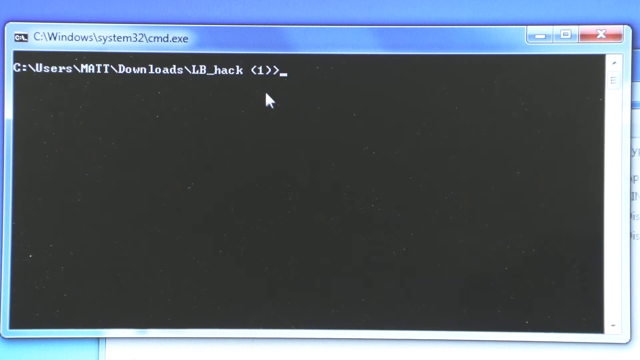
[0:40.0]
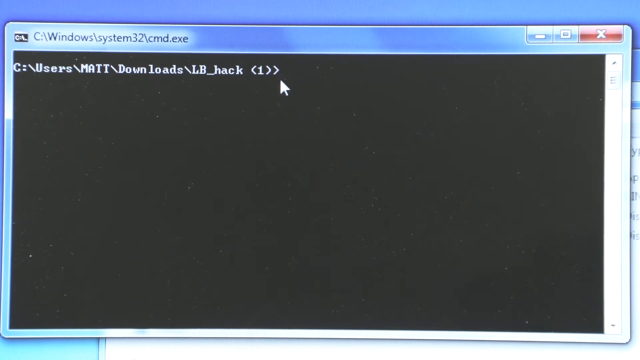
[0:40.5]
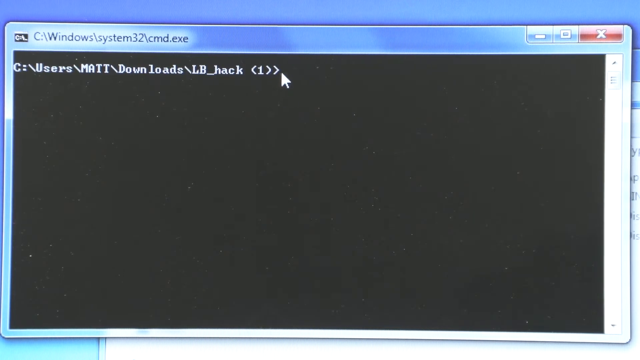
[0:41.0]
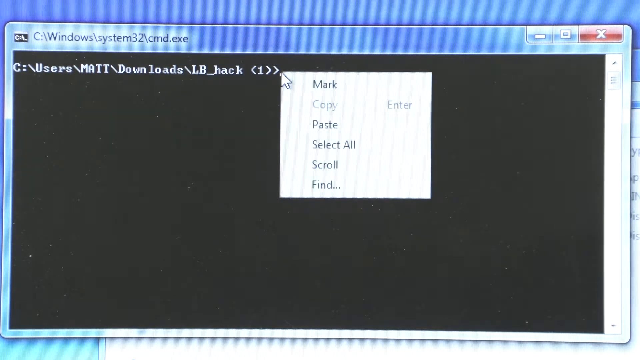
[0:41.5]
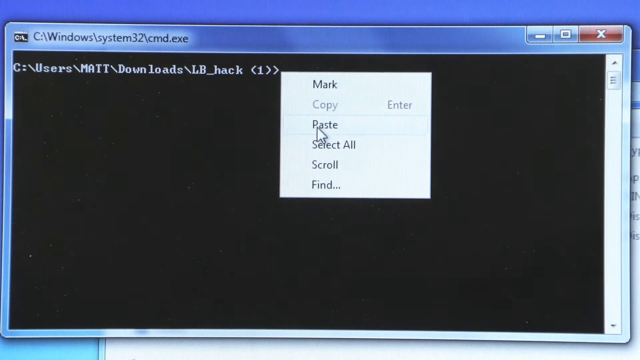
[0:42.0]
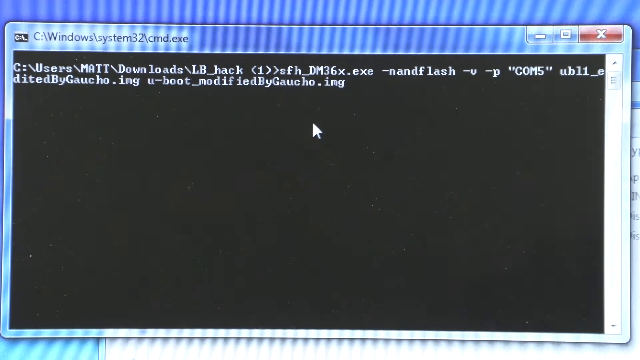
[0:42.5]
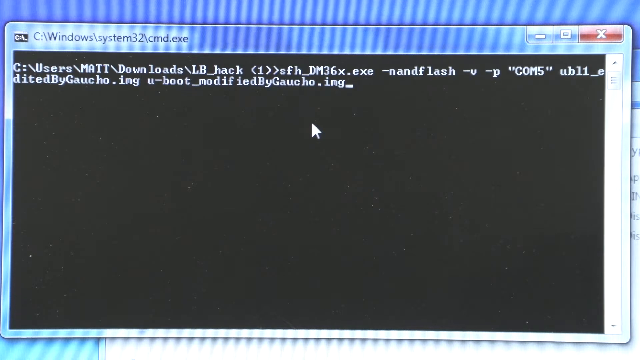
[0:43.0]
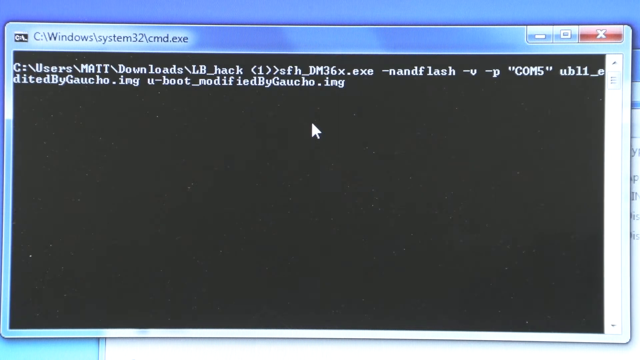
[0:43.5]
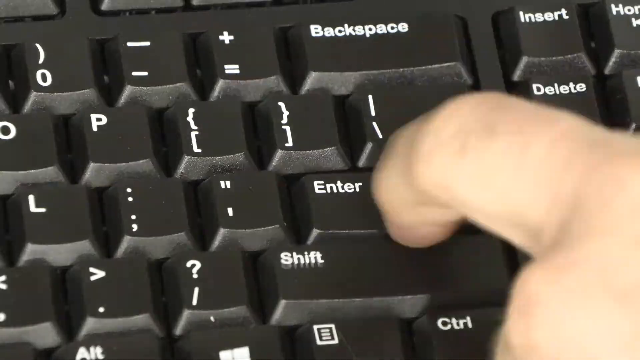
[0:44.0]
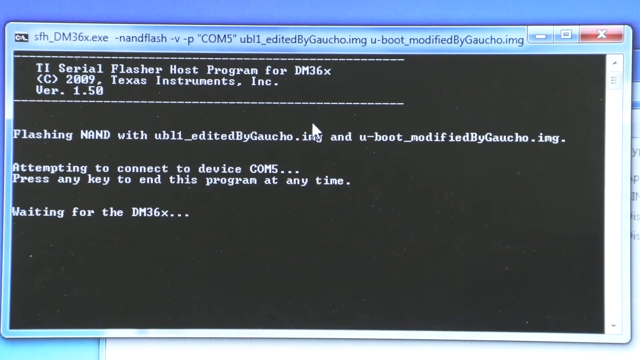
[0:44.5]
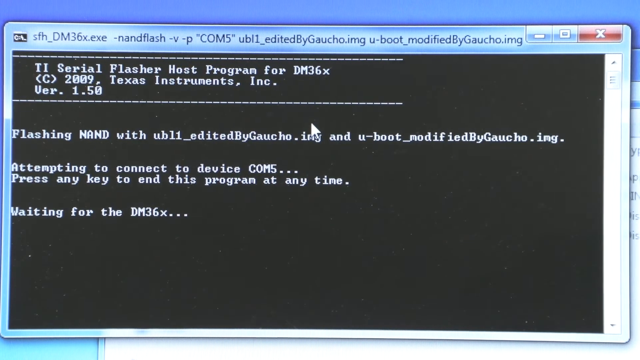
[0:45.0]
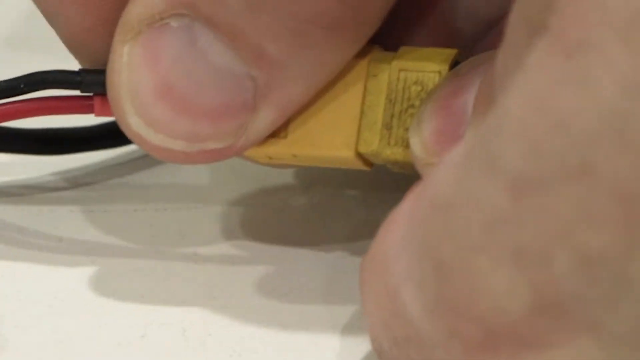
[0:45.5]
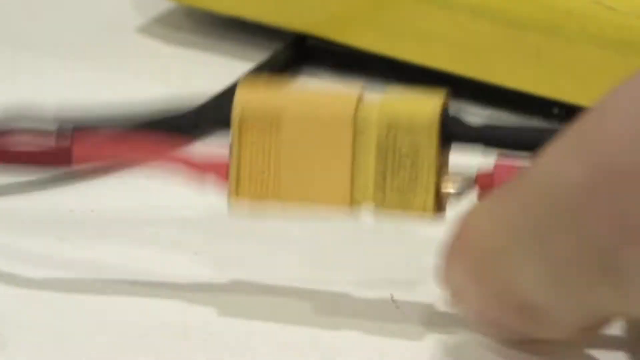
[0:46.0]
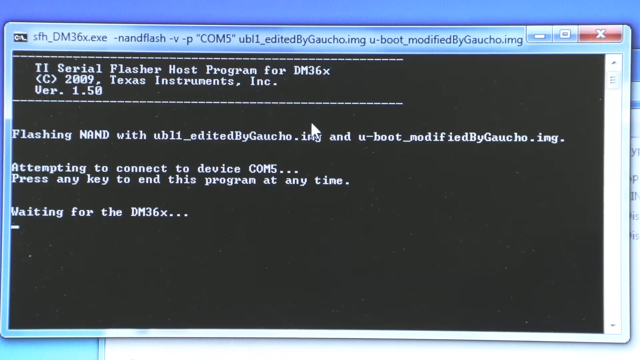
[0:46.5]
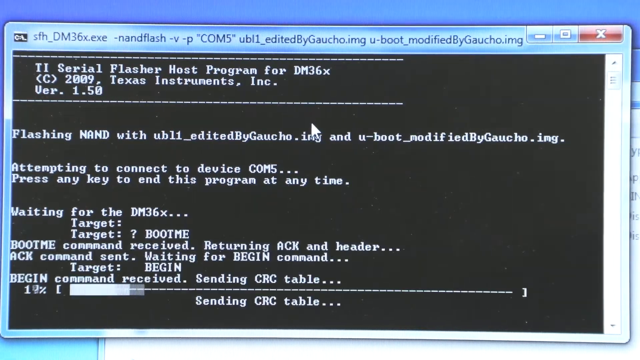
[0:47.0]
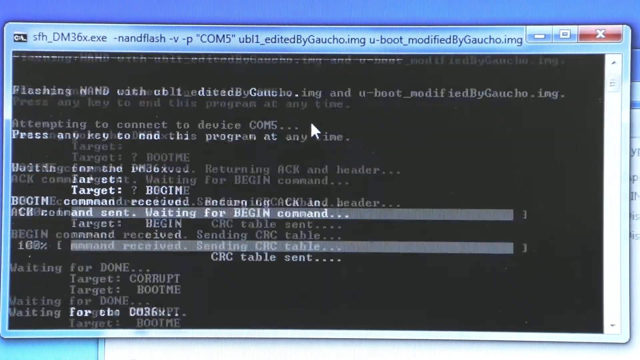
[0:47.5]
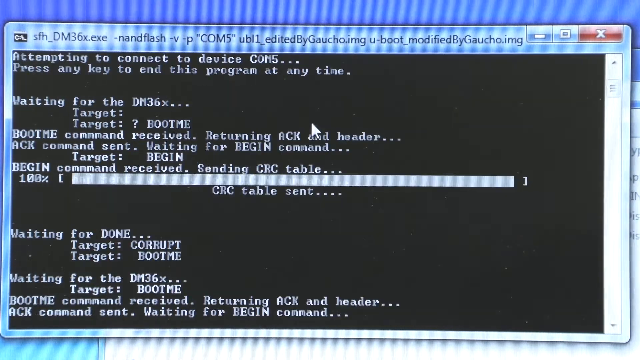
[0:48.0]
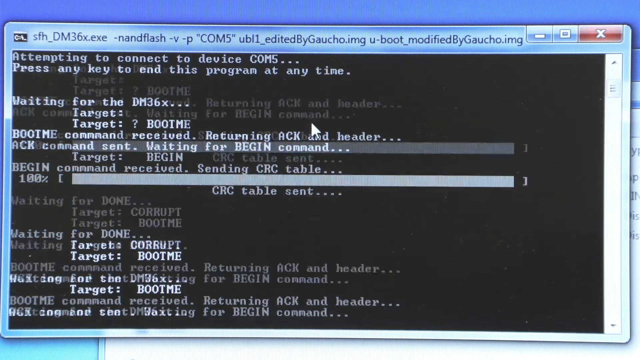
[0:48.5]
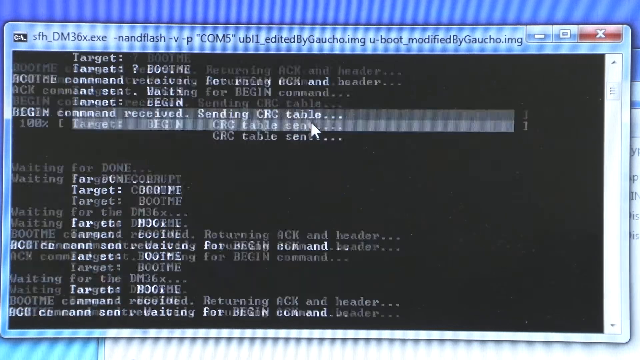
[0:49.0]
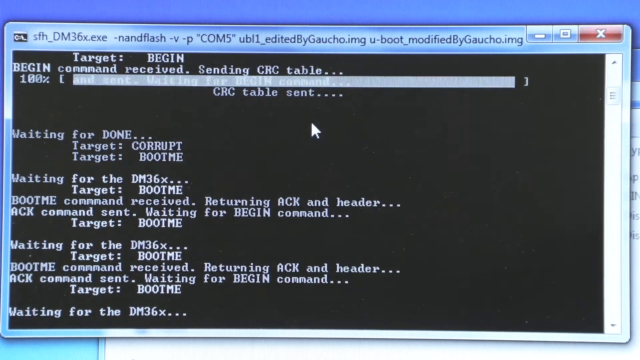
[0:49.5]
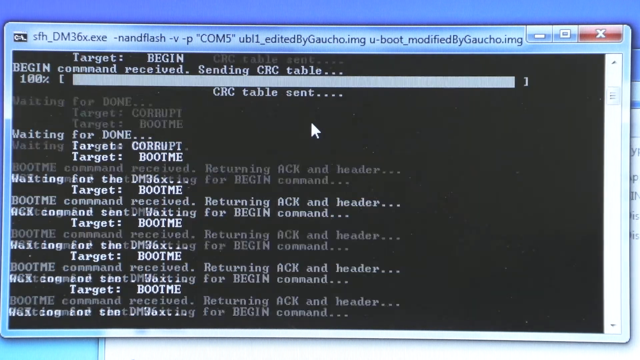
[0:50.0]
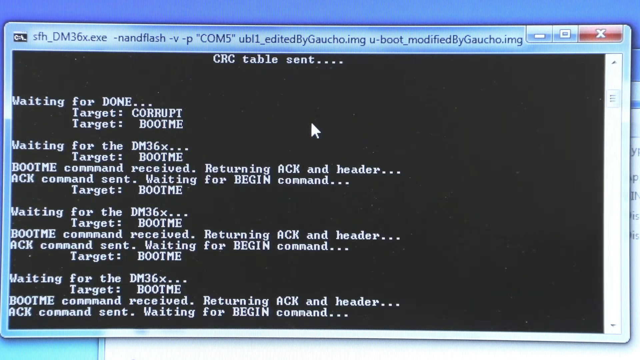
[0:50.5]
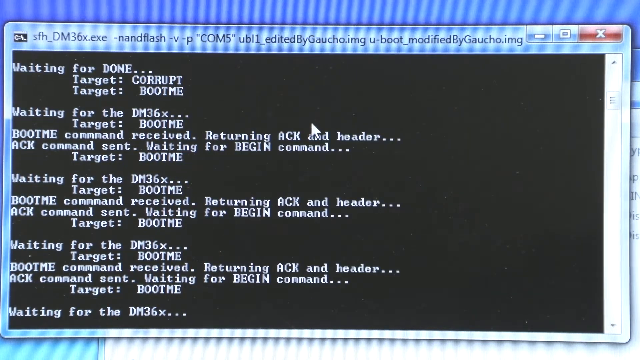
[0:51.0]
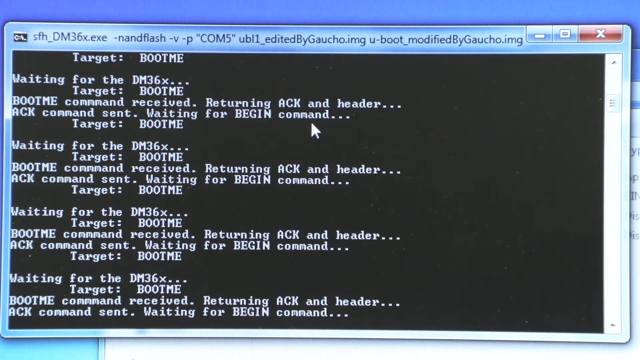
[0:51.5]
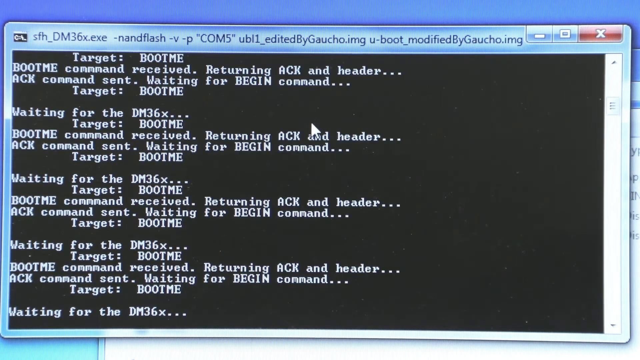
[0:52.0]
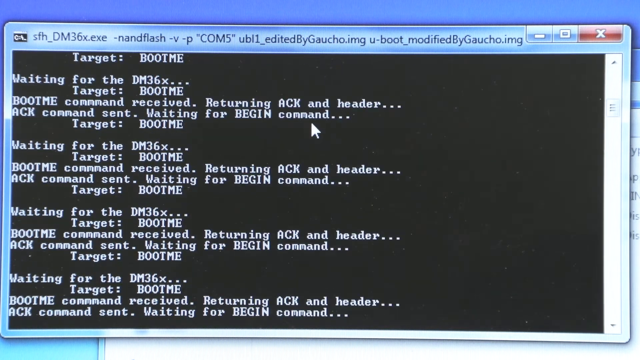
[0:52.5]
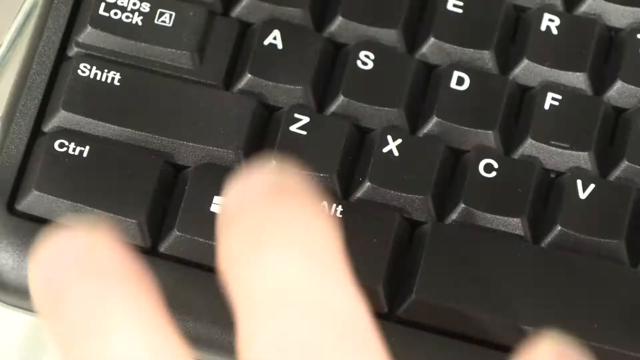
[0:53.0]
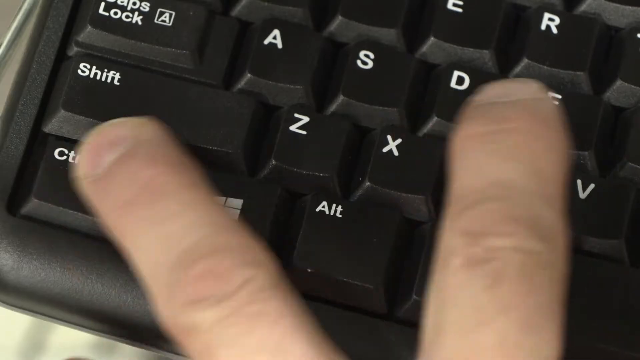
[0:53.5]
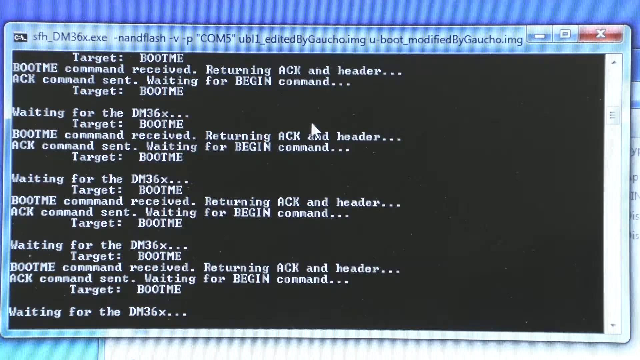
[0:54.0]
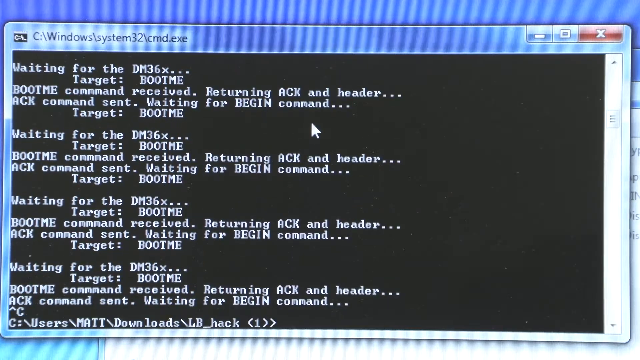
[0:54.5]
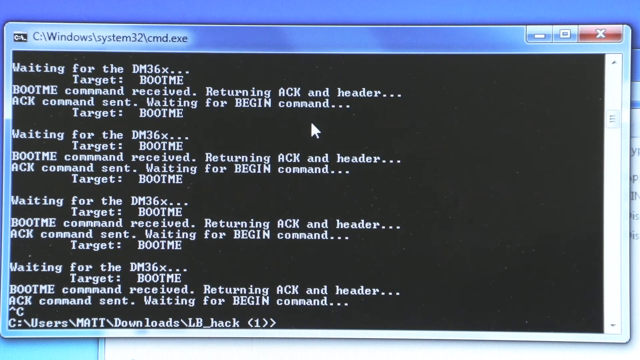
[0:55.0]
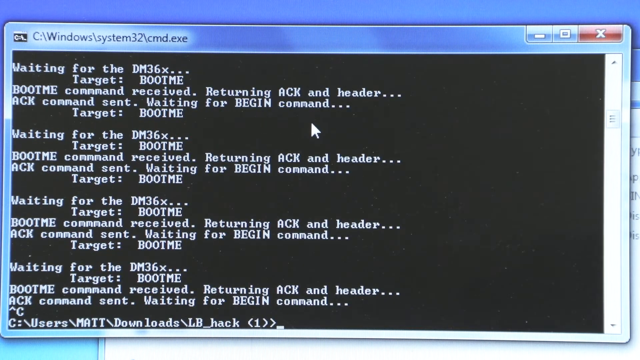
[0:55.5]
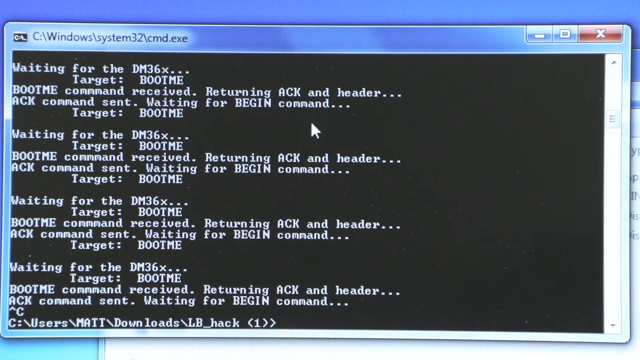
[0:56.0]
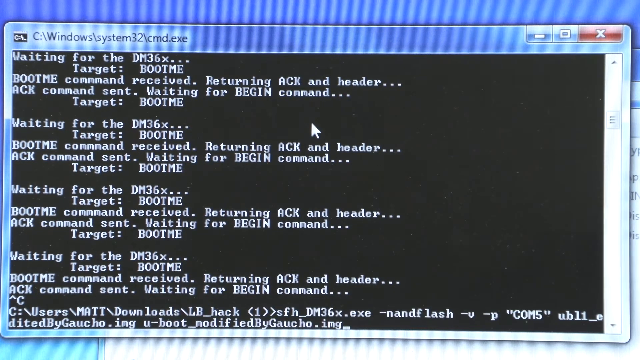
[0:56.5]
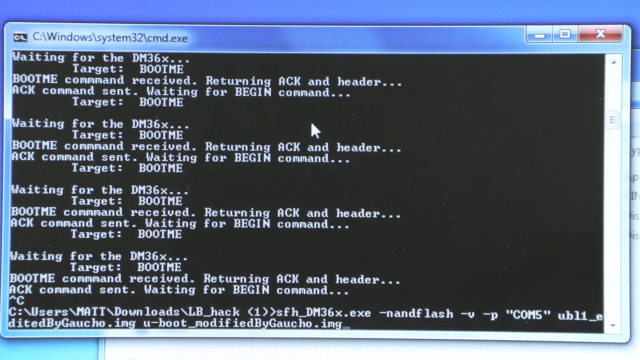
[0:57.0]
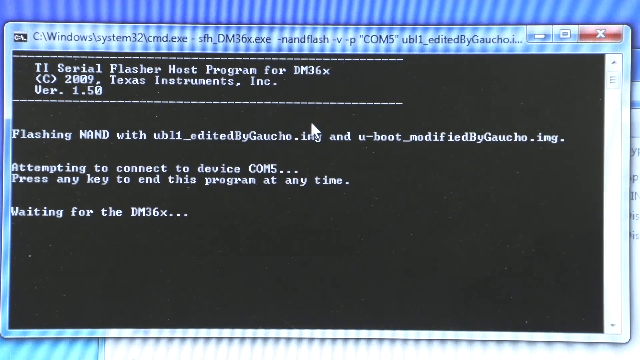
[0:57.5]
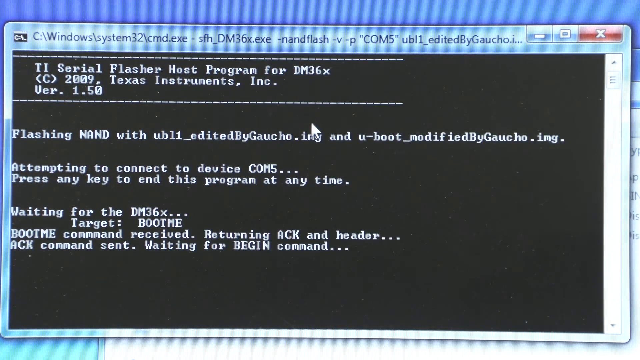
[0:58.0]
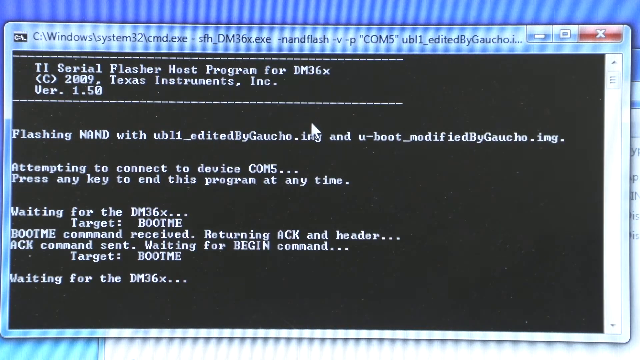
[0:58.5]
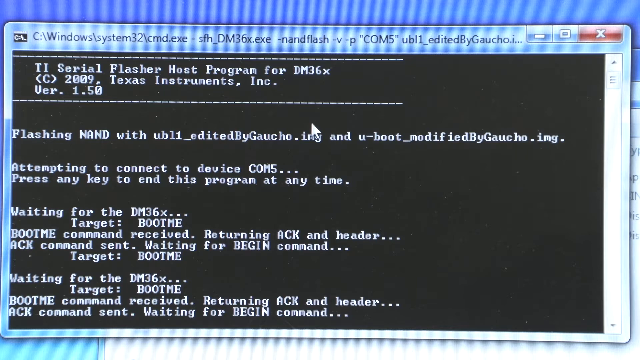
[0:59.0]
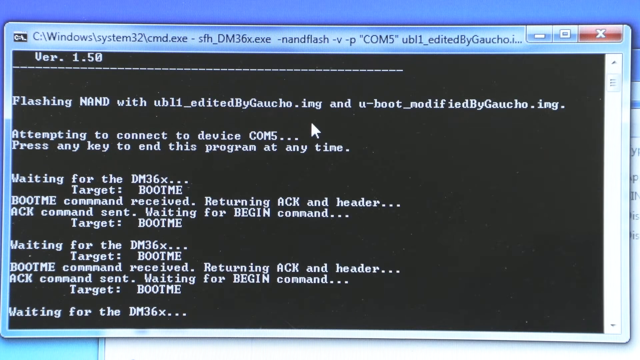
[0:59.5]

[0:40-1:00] The code page shows a few lines of code. A keyboard is quickly flashed and the enter key is pressed. A yellow plastic piece is shown connected together, with a wire coming out of the back of each side. The code box returns with lines of code in white text on a black background. A hand on the keyboard presses Ctrl V, and a number of commands appear in the code box. The lines of code scroll down through the box very quickly, all in white text against the black background. The user name shows at the beginning, with a path including "C\users", "mat" and "downloads", followed by a line of code. Enter is pressed once more, the yellow piece is connected, the code loads quickly down the dialog box, and after Ctrl V more code appears.